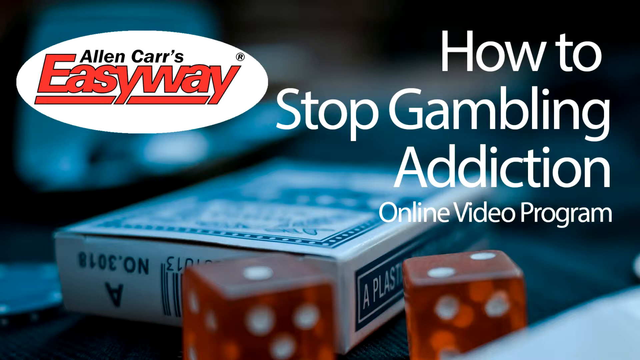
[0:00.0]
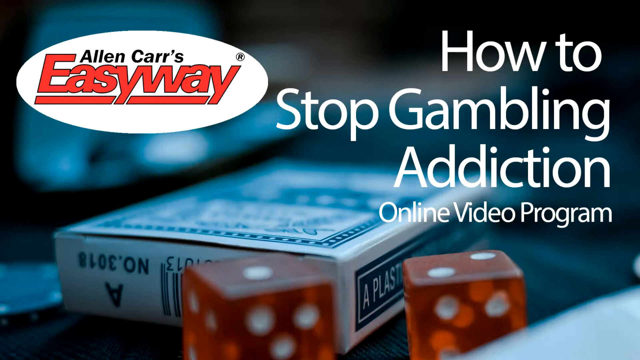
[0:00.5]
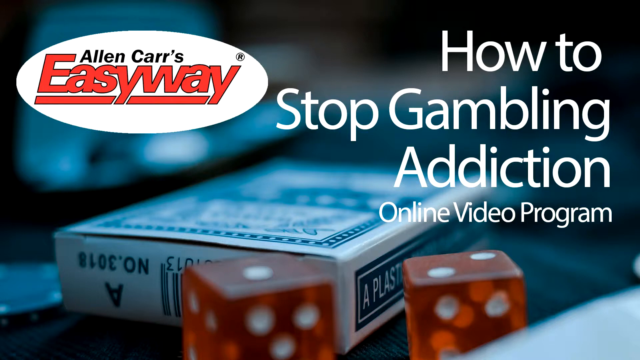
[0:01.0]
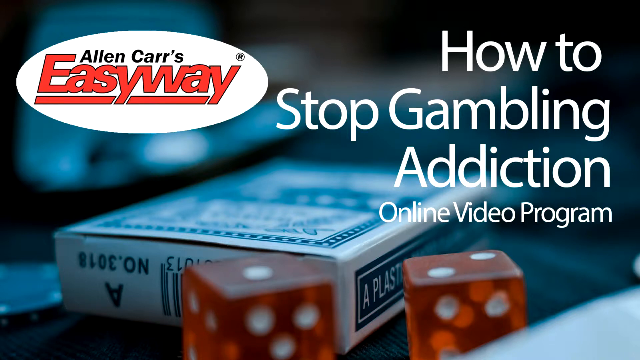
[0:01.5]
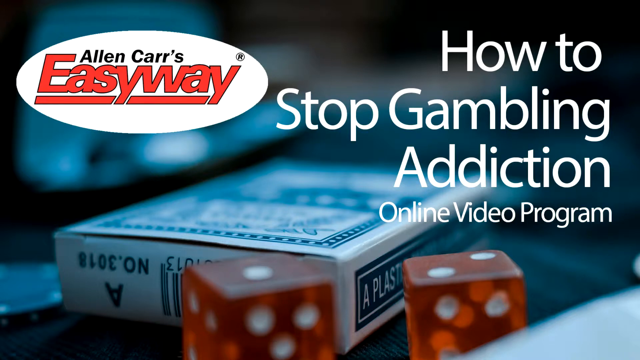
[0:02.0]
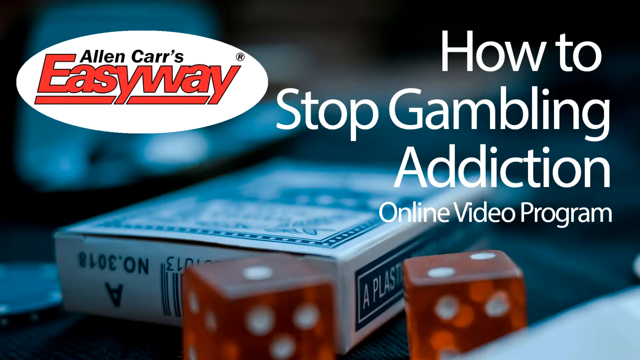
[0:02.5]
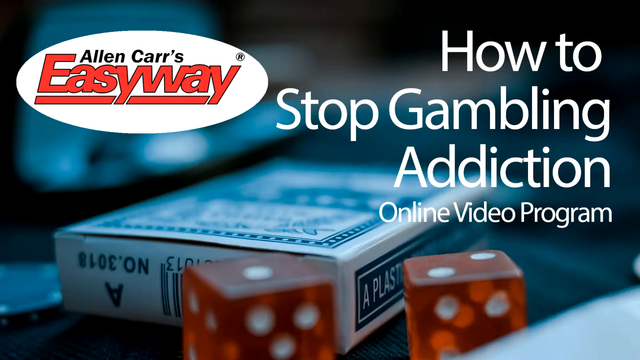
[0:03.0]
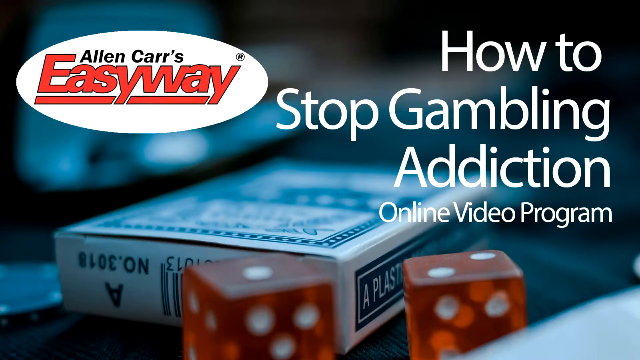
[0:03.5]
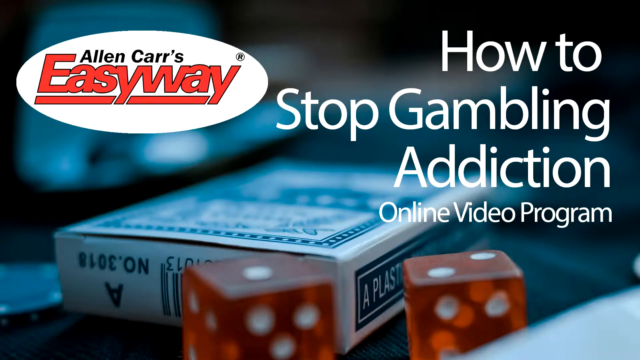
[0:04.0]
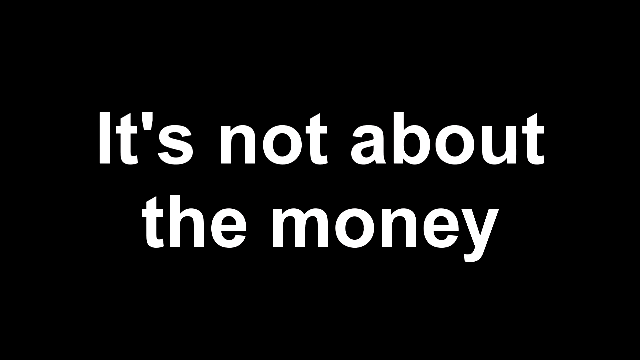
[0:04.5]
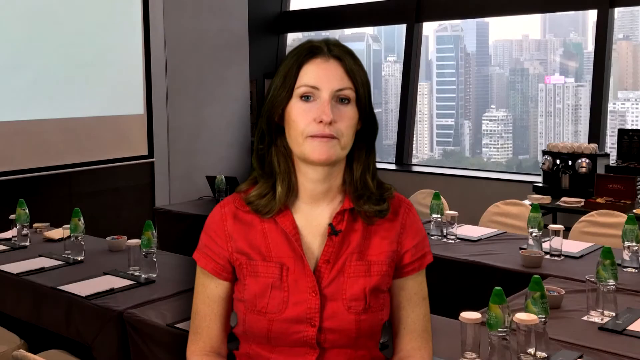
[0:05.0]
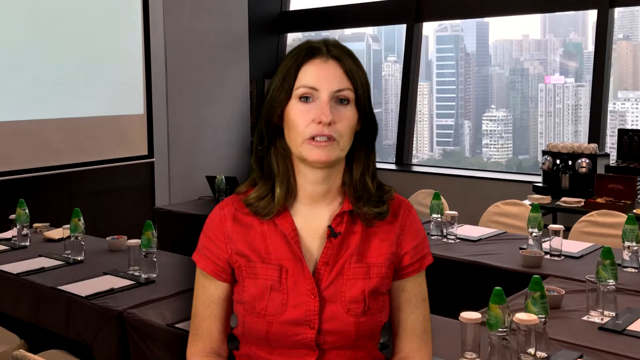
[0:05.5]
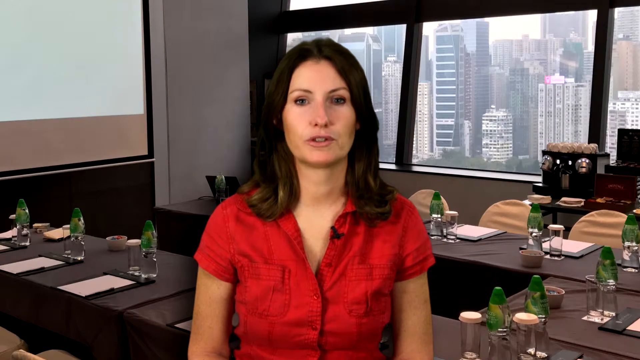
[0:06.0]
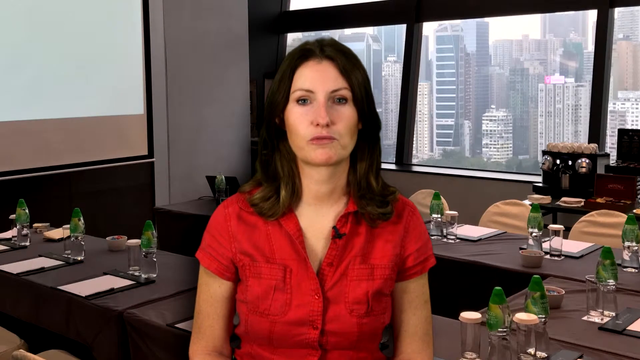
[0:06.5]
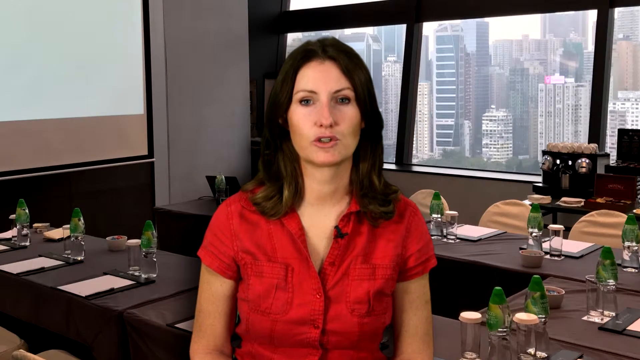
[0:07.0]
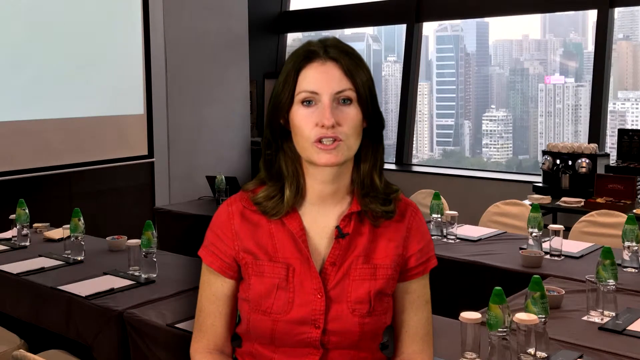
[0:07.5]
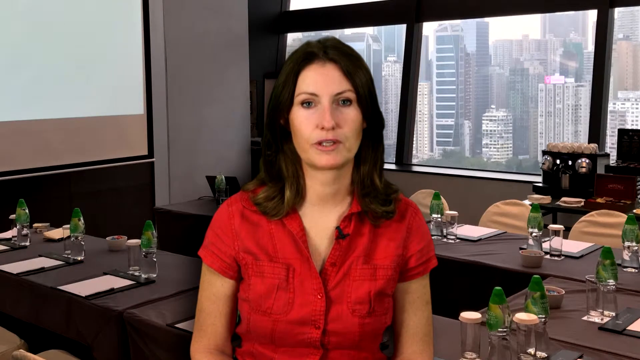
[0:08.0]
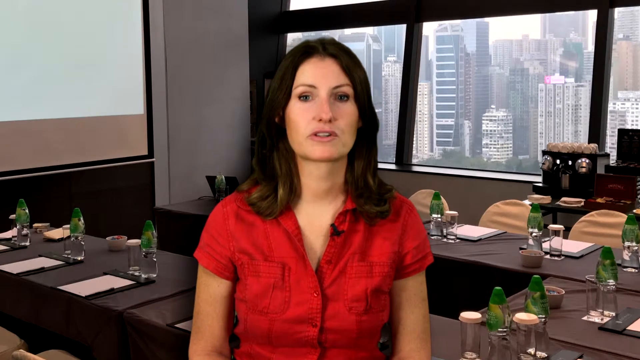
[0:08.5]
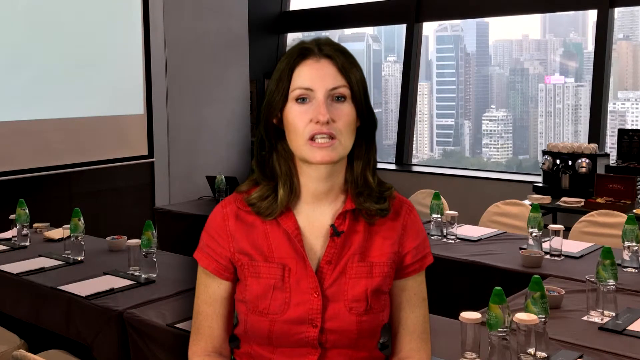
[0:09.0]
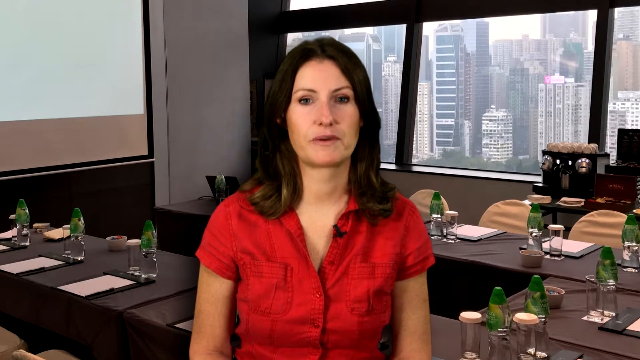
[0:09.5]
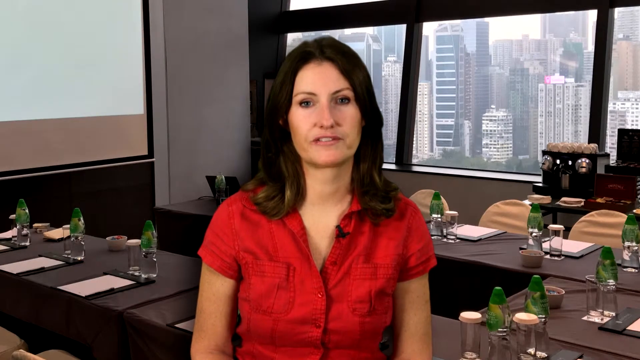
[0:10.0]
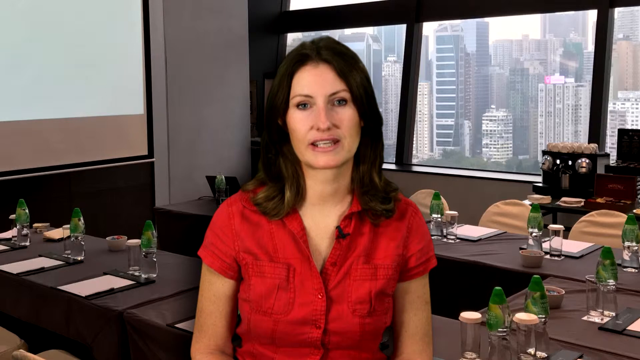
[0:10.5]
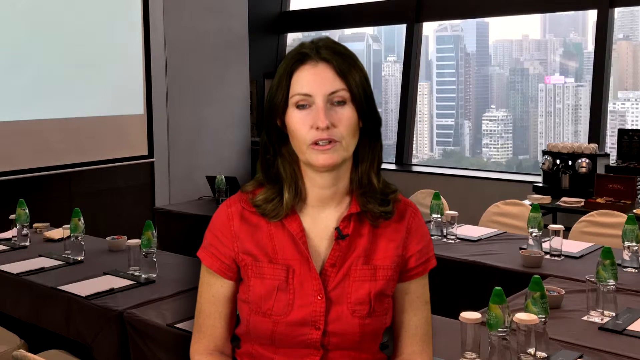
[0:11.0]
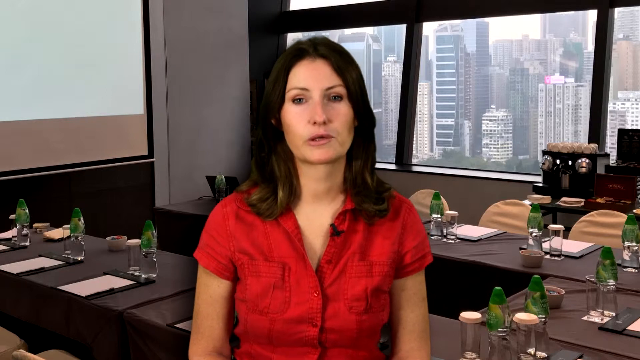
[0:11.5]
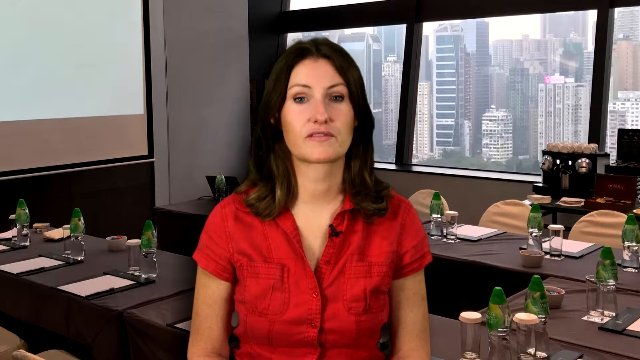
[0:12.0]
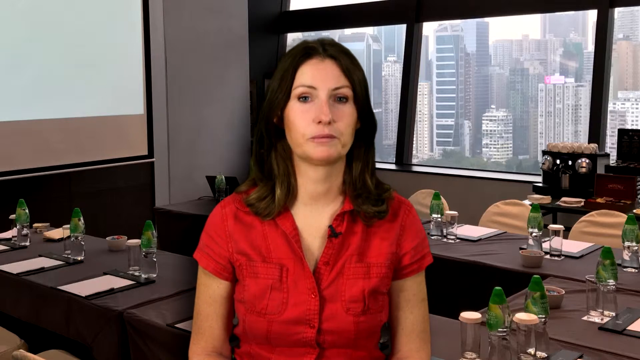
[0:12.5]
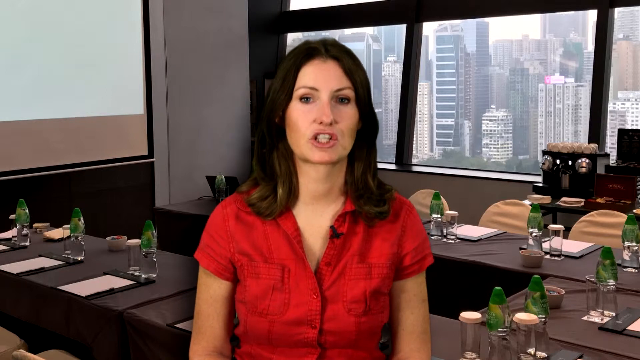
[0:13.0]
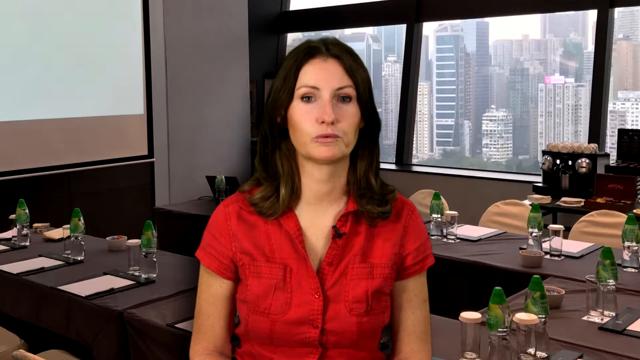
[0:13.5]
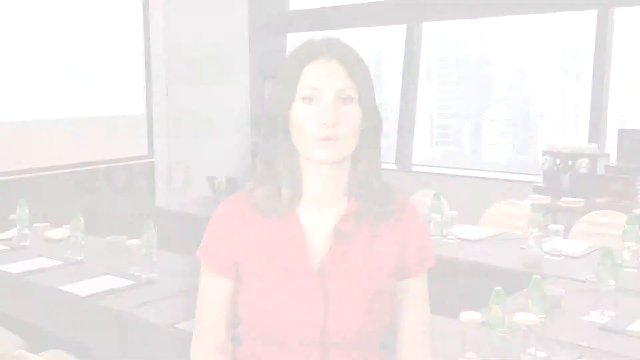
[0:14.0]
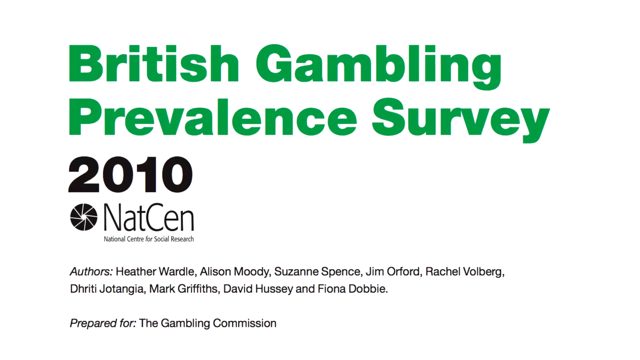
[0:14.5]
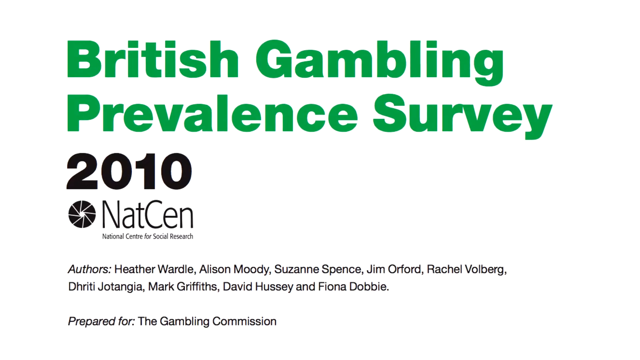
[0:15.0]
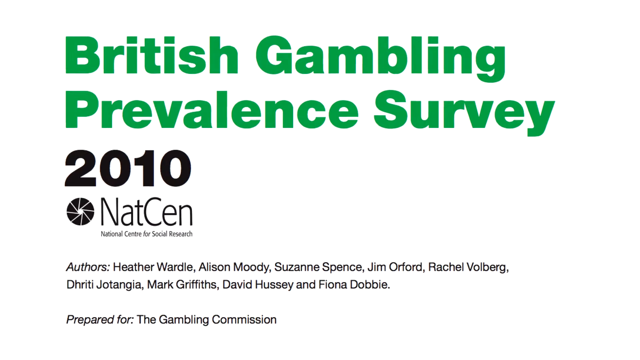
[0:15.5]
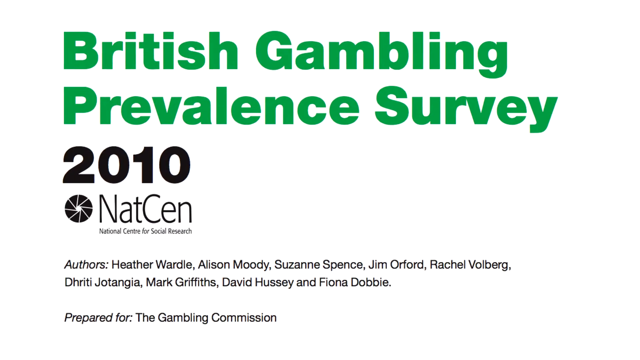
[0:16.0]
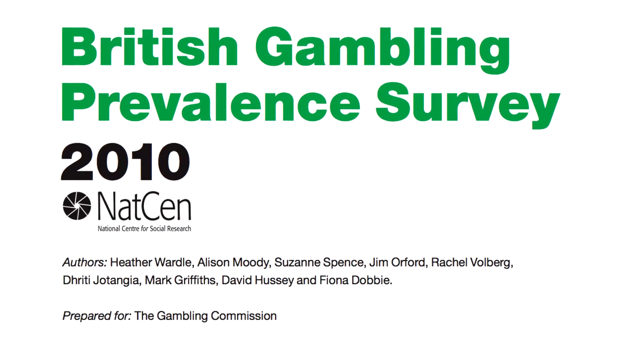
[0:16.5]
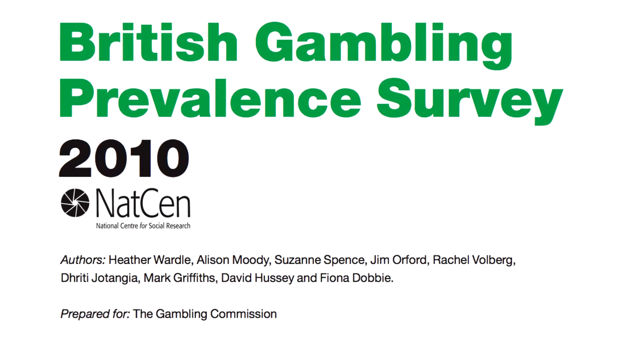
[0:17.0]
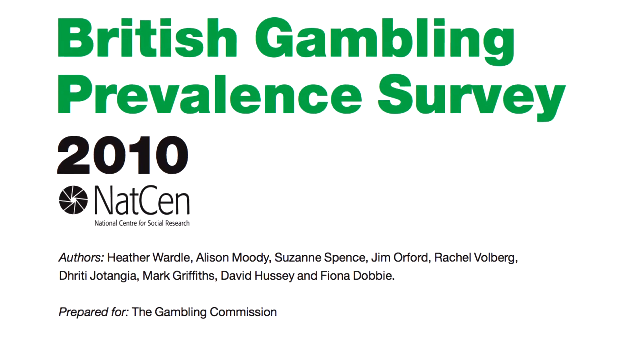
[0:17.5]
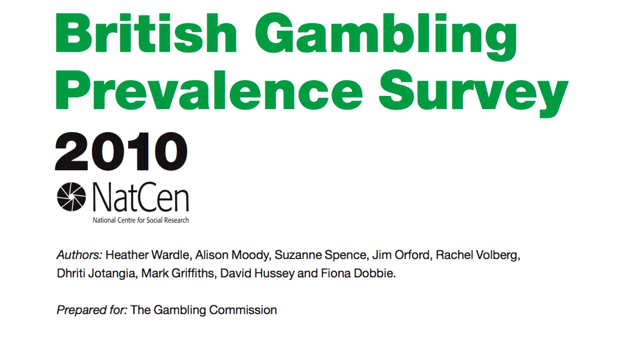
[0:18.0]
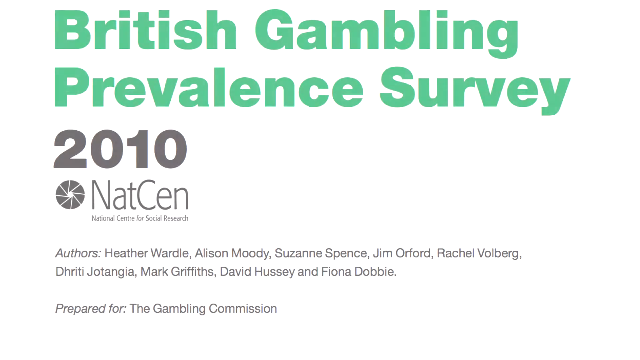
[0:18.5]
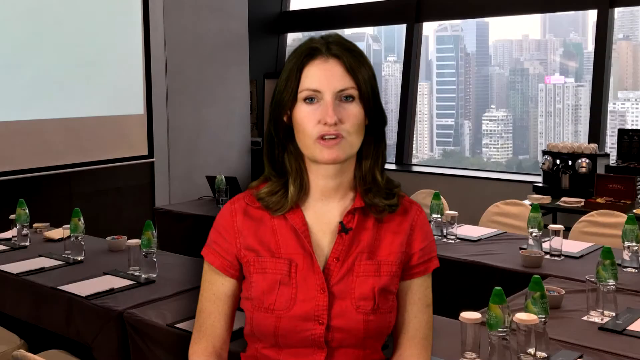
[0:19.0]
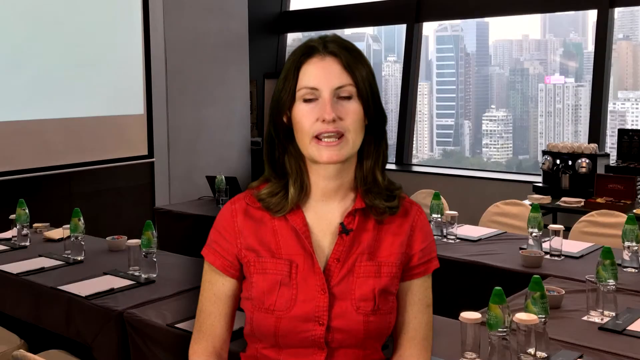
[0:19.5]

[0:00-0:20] The video opens on a static screen with information on it: "Alan's Car Easy Way, how to stop gambling addiction online video program." It transitions to a black screen with white text that says "it's not about the money," then to a subject with brown hair in a red shirt, with the city in the background and what looks like a dining or fine dining area behind her, though it seems to be a green screen. The subject, a woman who appears to be around 35, Caucasian, with brown hair and a red shirt, continues talking. She is then taken off the screen, and it transitions to a white background screen that reads "British Gambling Prevalence Survey 2010," listing authors including Heather Wardle and Alison Moody, along with more information about the survey and its authors. The camera kind of pans down, and the video transitions back to the woman in the red shirt.